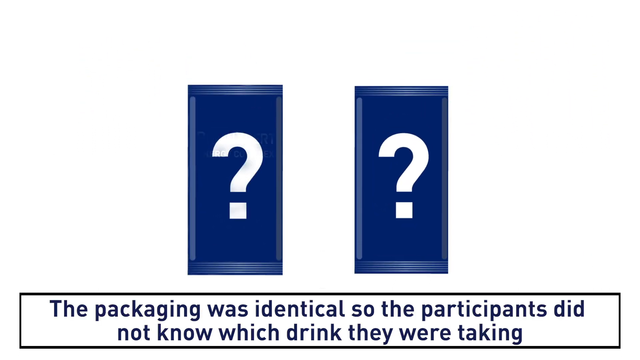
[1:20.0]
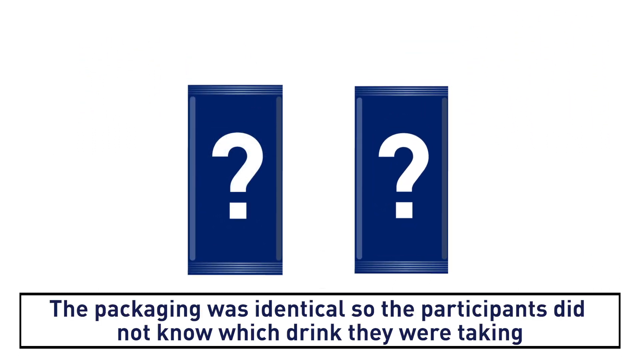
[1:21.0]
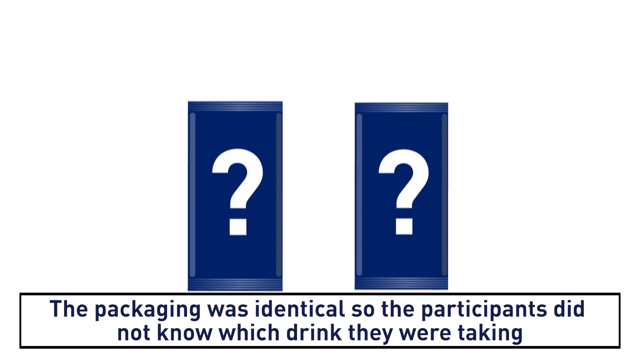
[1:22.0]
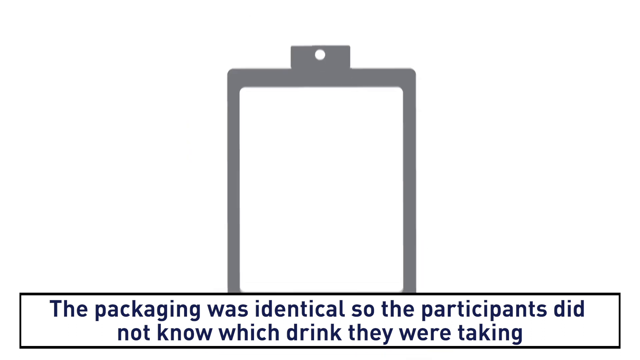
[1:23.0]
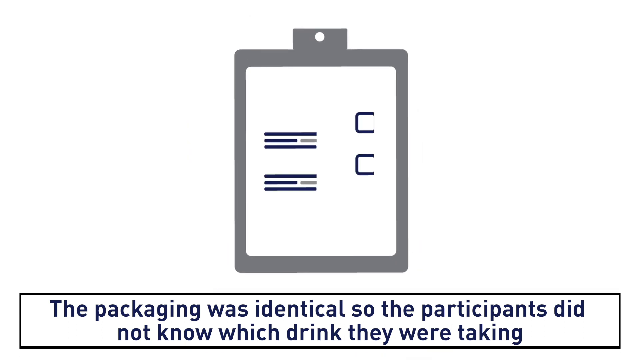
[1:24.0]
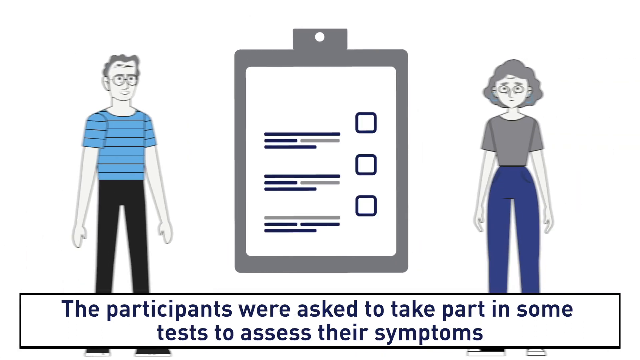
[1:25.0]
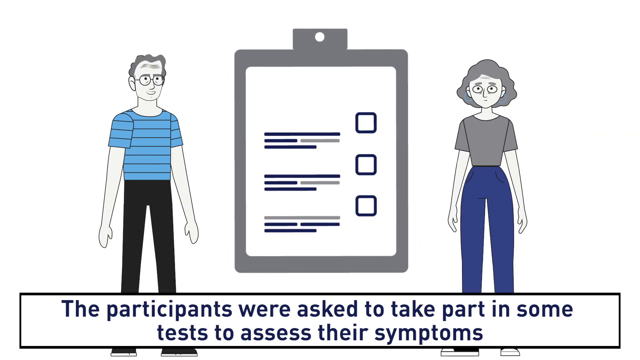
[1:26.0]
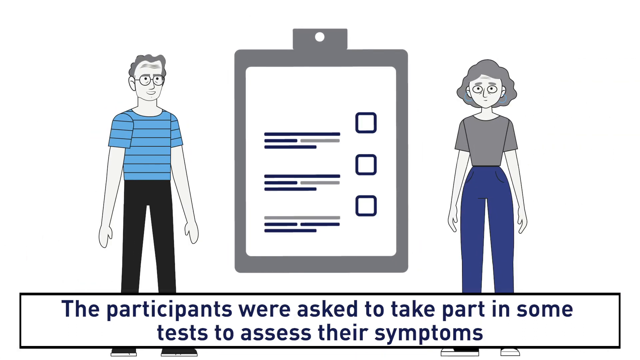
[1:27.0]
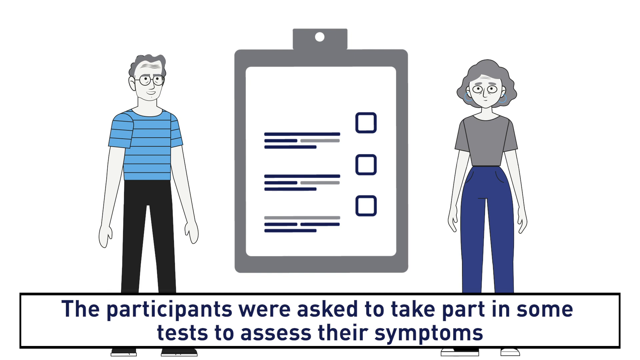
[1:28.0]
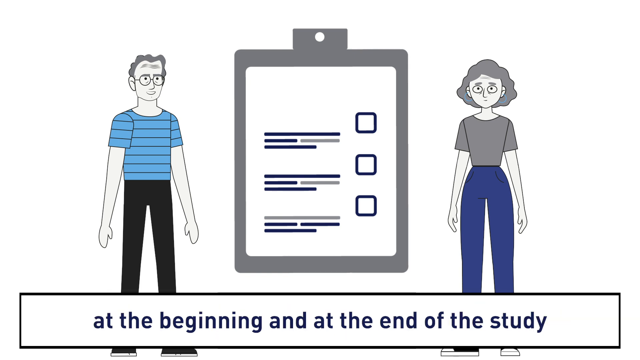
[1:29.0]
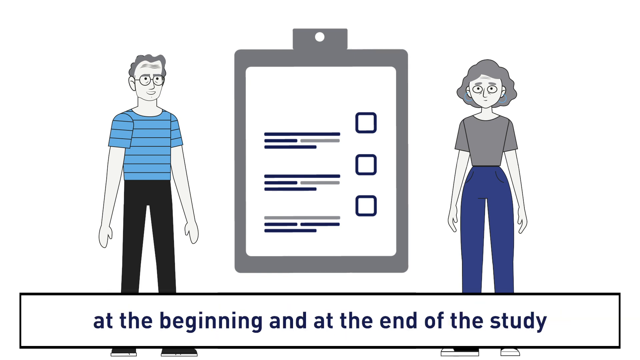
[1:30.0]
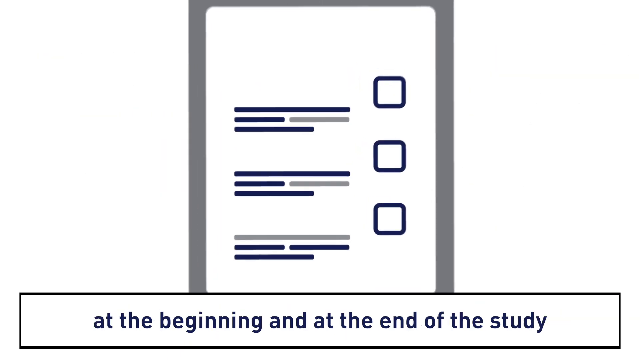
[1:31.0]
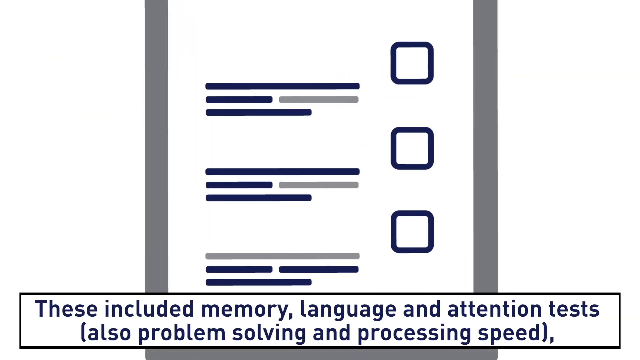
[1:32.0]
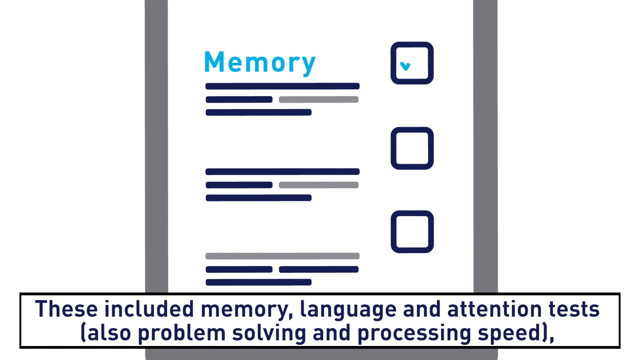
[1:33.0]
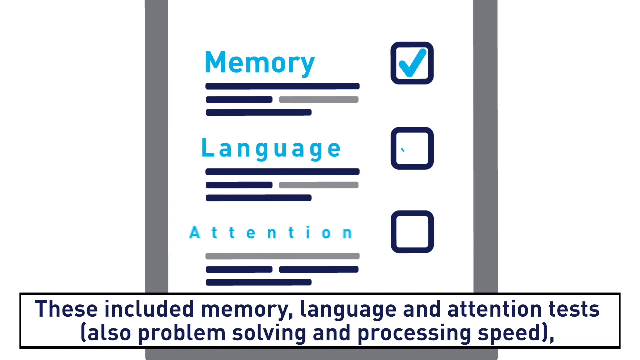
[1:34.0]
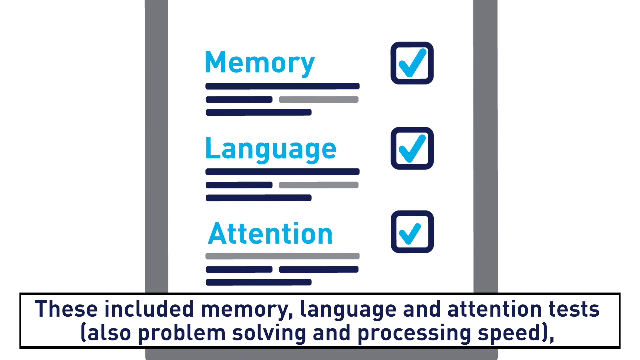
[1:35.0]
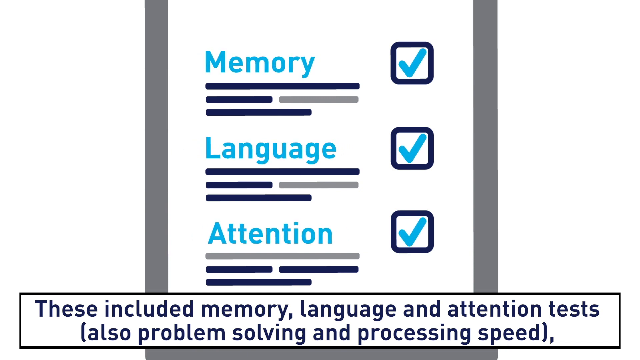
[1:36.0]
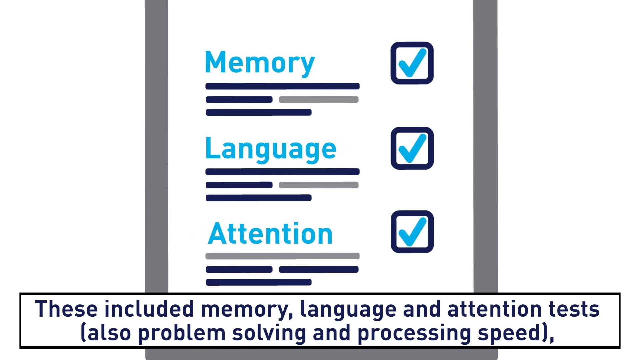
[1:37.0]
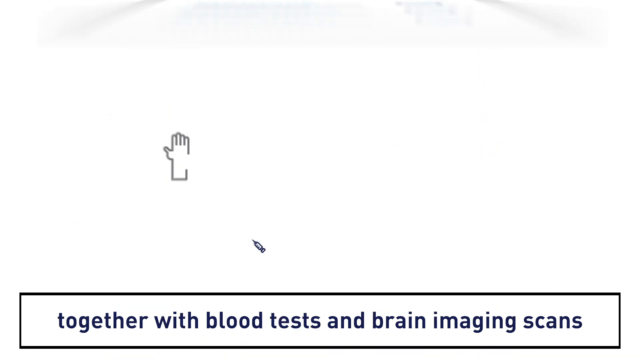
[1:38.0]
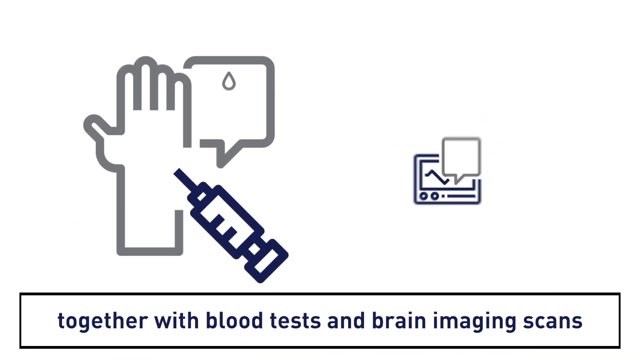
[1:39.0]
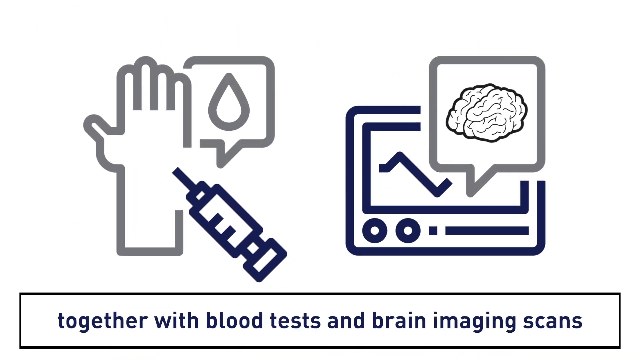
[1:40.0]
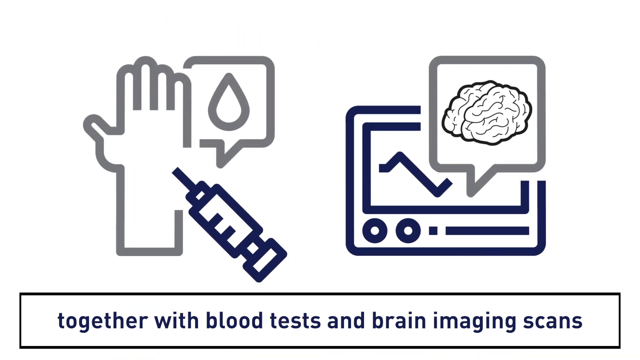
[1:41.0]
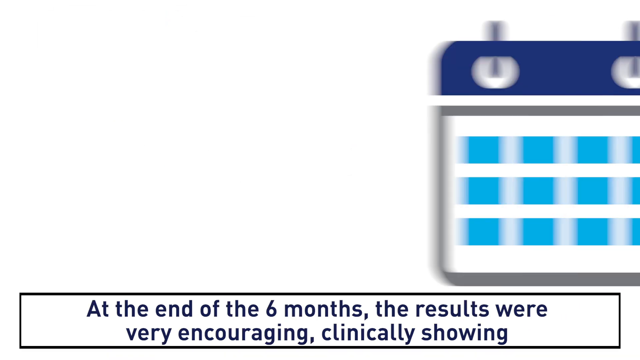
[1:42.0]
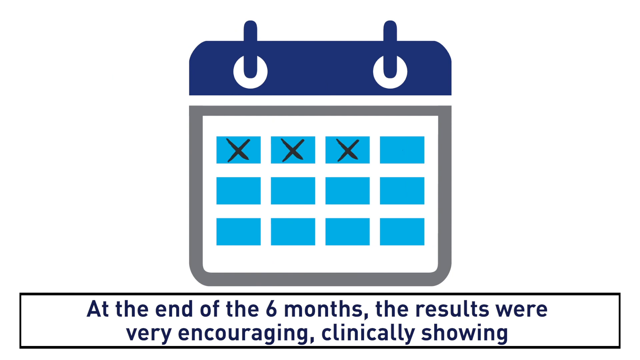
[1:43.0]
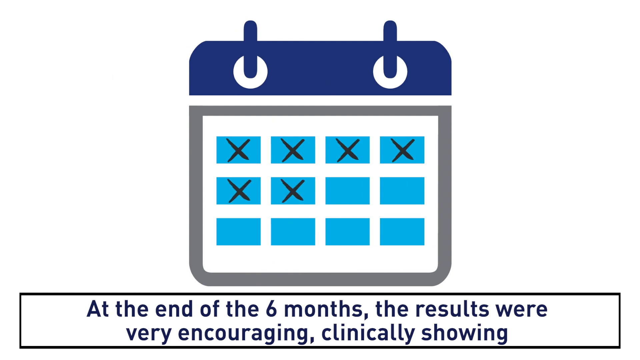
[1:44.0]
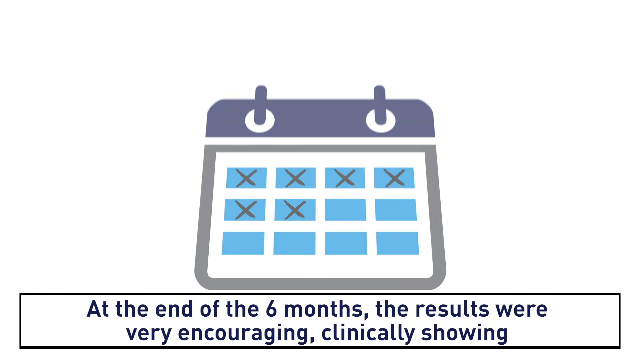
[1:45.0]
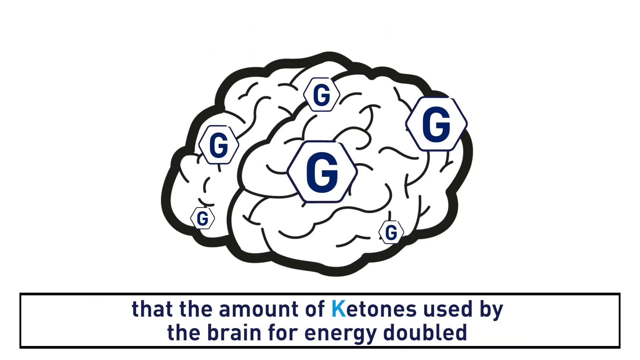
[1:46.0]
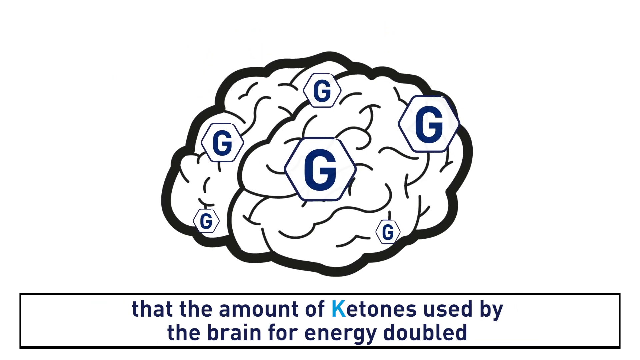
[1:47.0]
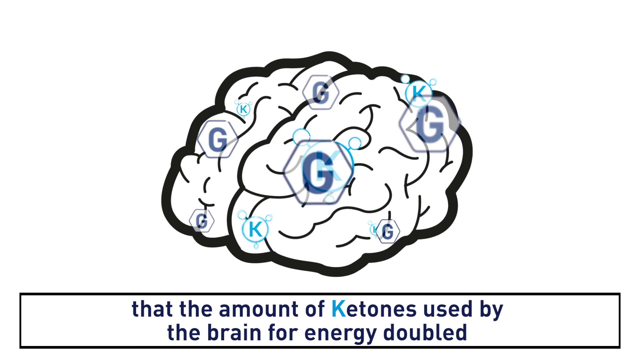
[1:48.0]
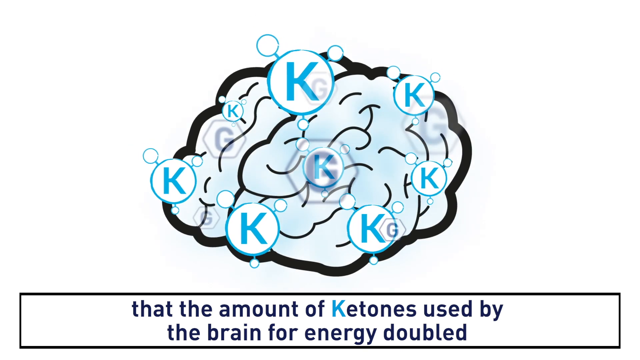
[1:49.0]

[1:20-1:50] Two question marks, each in a blue rectangle, are shown, with the bottom text "the packaging was identical so the participants did not know which drink they were taking". The question marks disappear and a clipboard appears with three areas, each with a check-mark box beside it. On the left is a male with glasses, black pants and a blue shirt with horizontal stripes; on the right is a female with short hair, blue pants and a gray shirt, who apparently does not wear glasses. The bottom text reads "the participants were asked to take part in some tests to assess their symptoms", then "at the beginning and at the end of the study", then "these included memory, language and attention tests, also problem solving and processing speed". Memory, language and attention are checked. Next, an image shows a hand with a needle and a speech bubble containing a drop of liquid; to the right is a monitor with two dials and an LCD screen and a speech bubble with an image of the brain. The bottom text reads "together with blood tests and brain imaging scans". Then the bottom text says "at the end of the six months, the results were very encouraging, clinically showing" over a black-and-white image of the brain with letter G's and hexagons throughout it. The text then says "that the amount of ketones used by the brain for energy doubled", and the letter K appears multiple times in the brain.